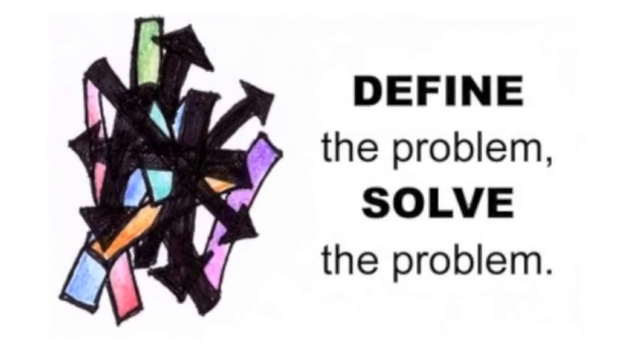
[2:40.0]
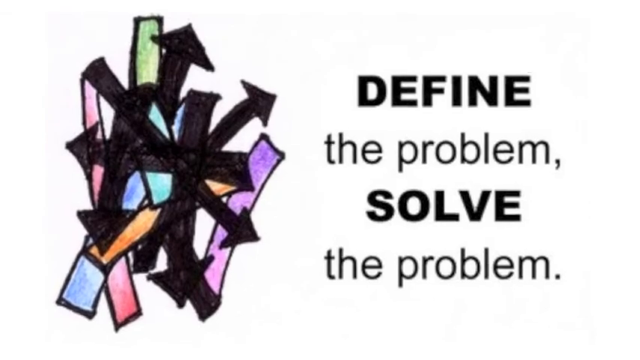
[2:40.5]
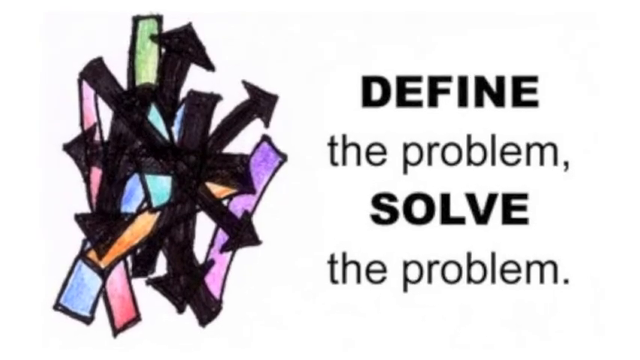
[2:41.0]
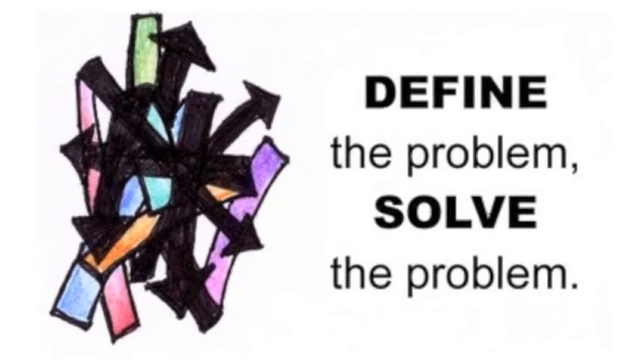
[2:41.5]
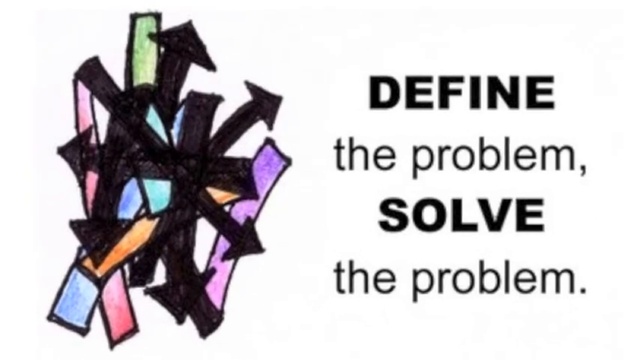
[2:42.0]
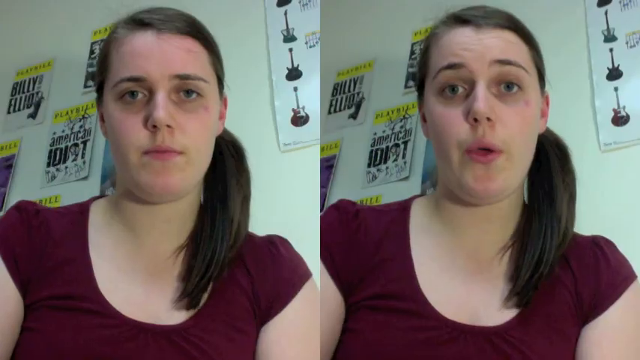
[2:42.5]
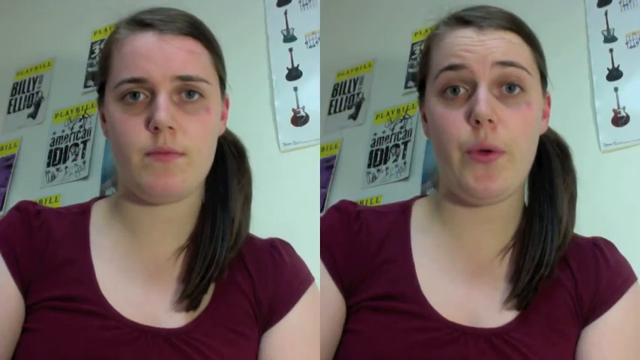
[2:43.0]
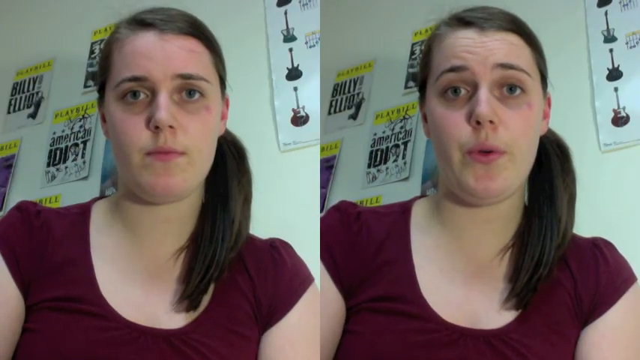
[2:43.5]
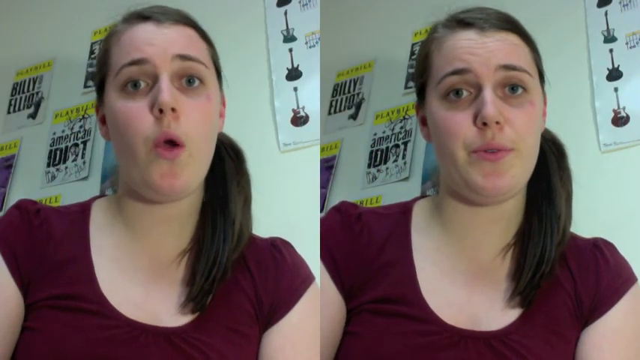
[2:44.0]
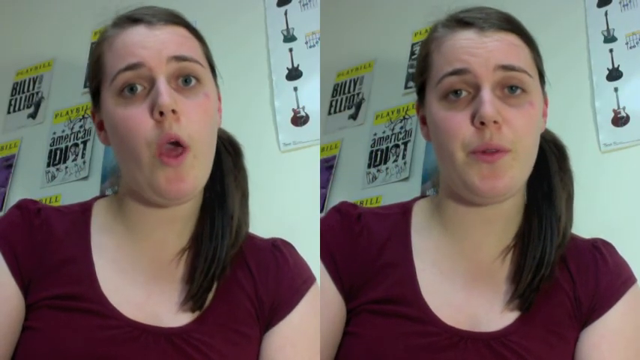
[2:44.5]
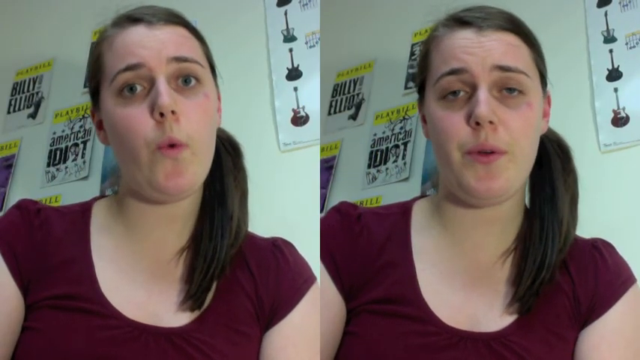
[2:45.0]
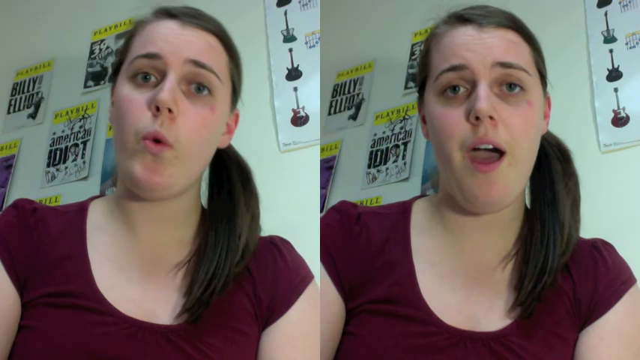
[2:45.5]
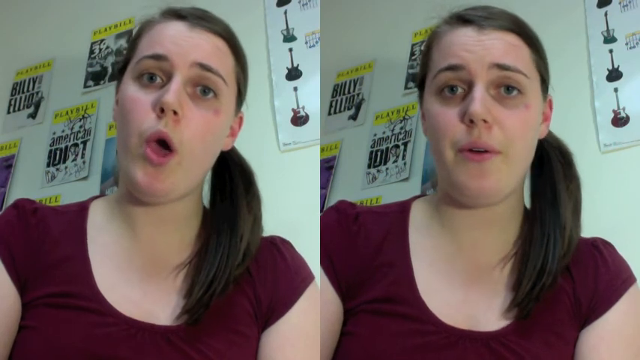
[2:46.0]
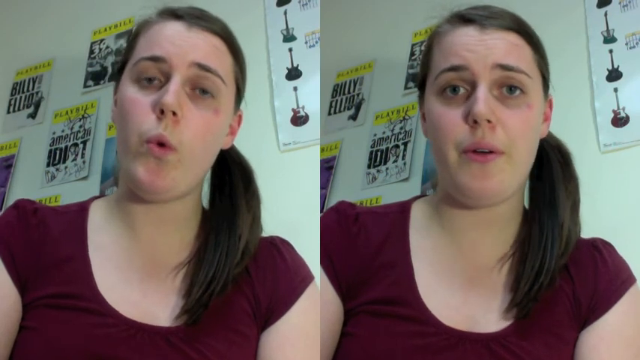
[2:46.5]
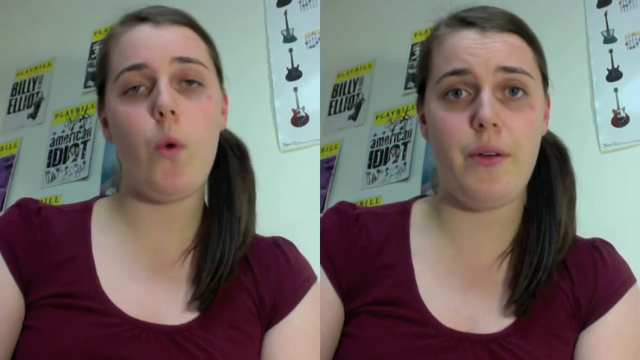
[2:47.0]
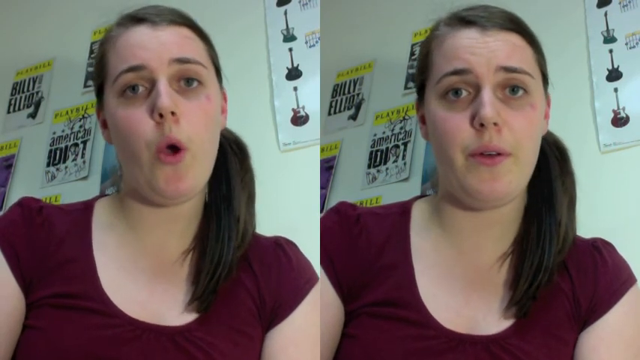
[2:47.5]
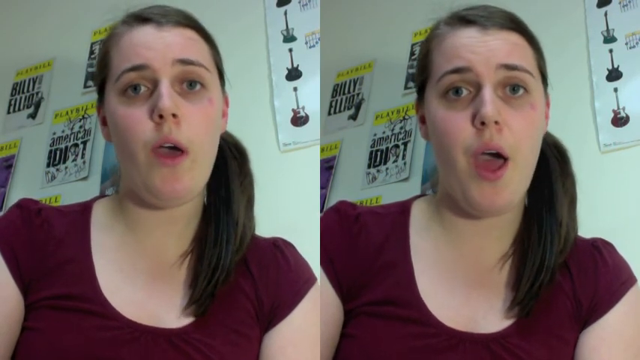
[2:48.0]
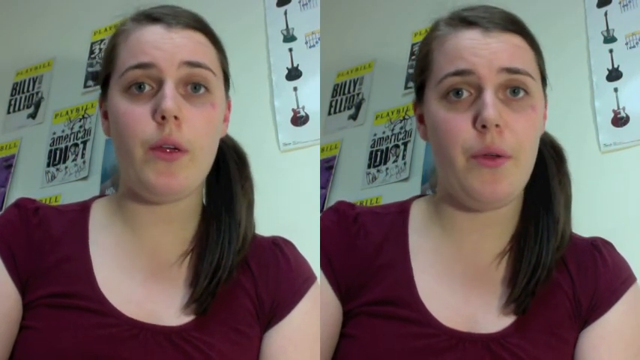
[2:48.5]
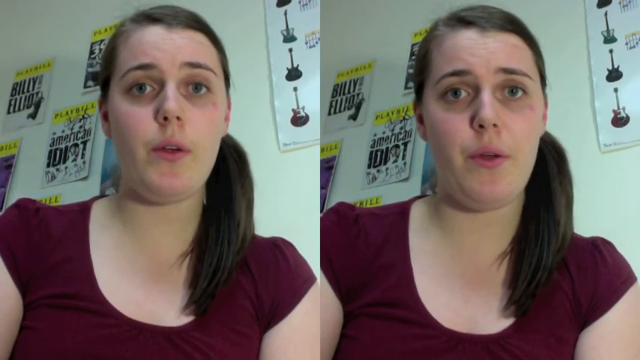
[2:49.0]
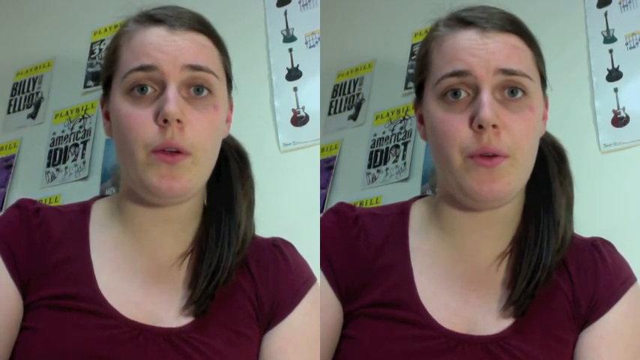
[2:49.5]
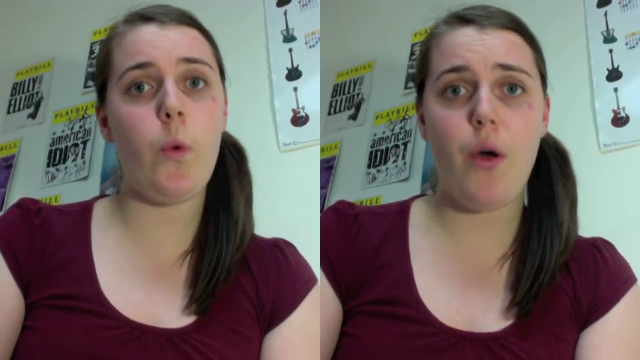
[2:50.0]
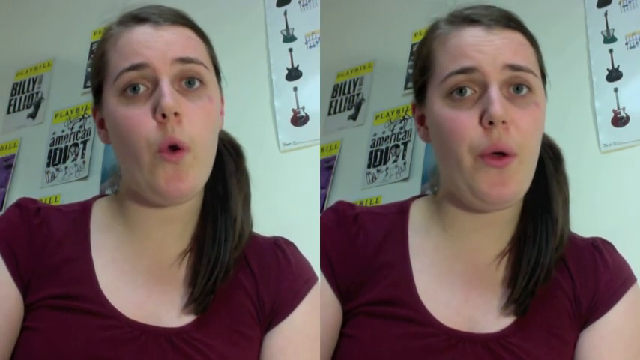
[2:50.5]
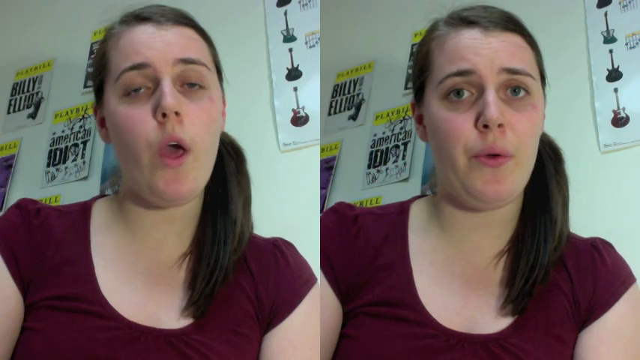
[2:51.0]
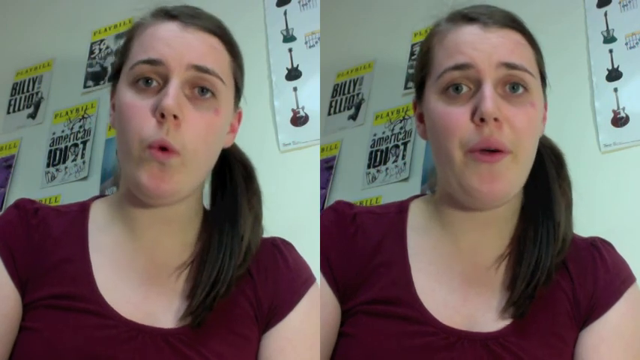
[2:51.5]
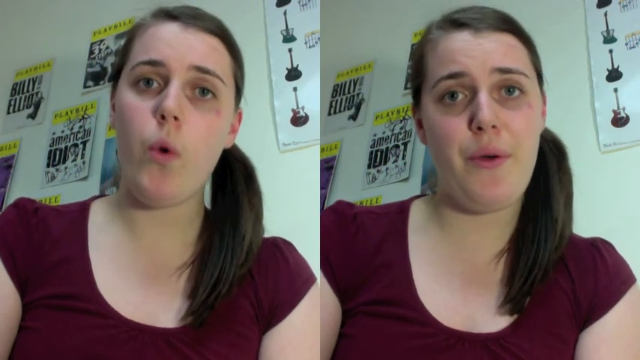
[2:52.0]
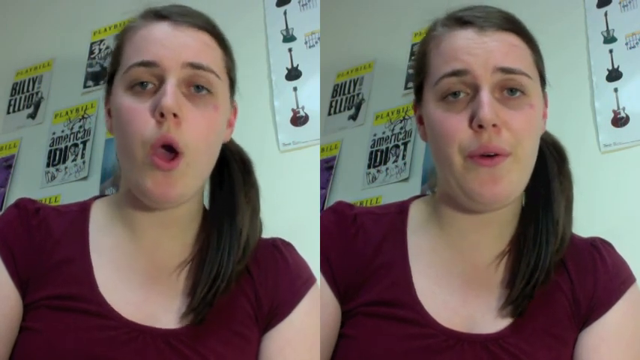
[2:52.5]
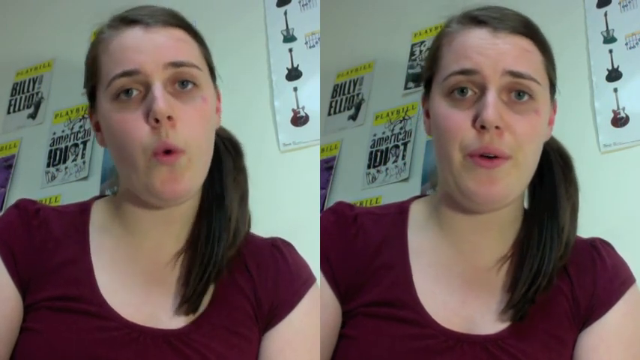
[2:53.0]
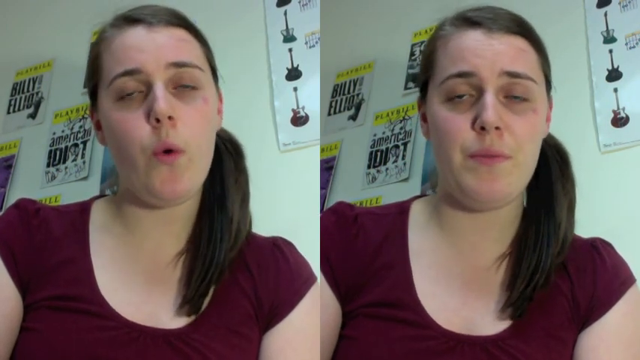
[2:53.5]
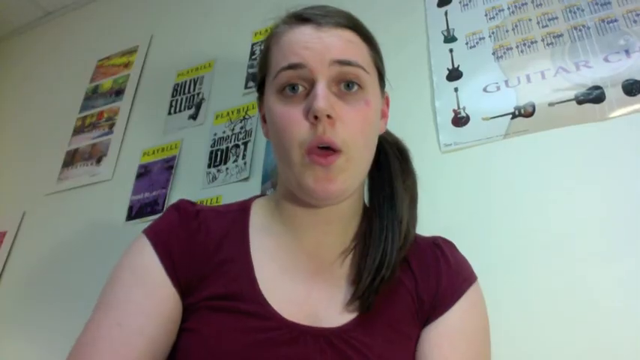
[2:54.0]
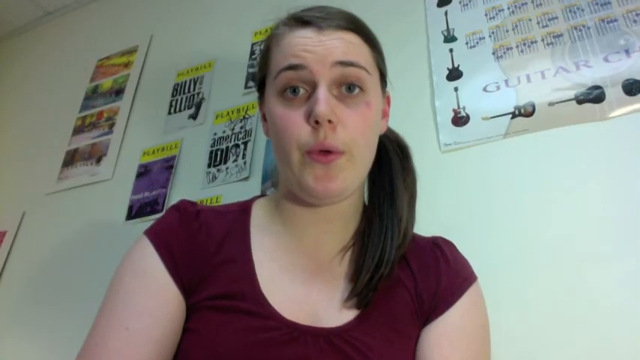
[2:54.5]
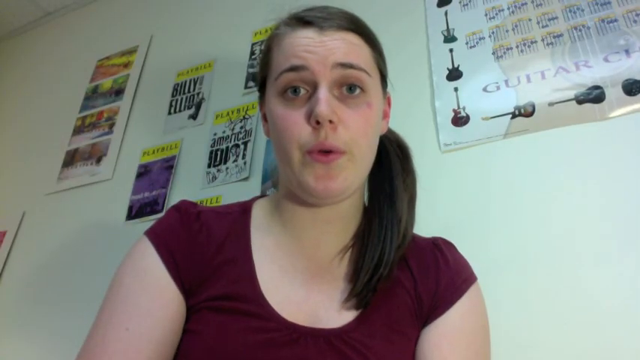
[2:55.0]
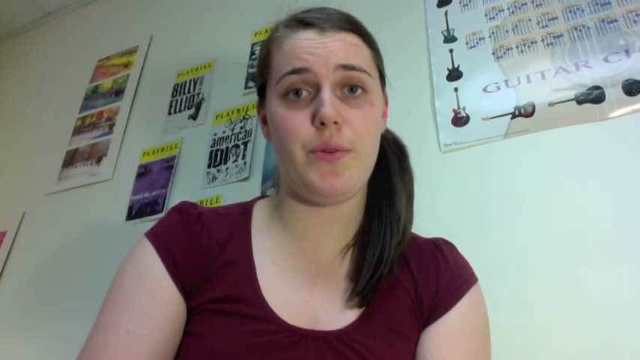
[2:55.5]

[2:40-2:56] The text "define the problem, solve the problem" appears with a bunch of black arrows and colored lines in purple, orange, blue and what looks like pinkish red, which look like colored crowns; it is unclear whether they are arrows. The view slowly goes to the girl, shown twice, separated, whistling and making funny faces. Then she appears alone without the split screen, bobbing her head left to right, talking a lot, looking at herself, and pointing at a bunch of different products, including the Kleenex in a blue box. Posters are behind her; one says Billy something. A blue virus appears, a woman with brown hair blows her nose, and antibiotic items are shown. The scientist holds the vial, a baby cries with an older couple behind the mom and baby in what looks like a waiting room, a door is smashed in by what looks like a virus, and a pneumonia sign has "just to name a few" underneath it in red letters.